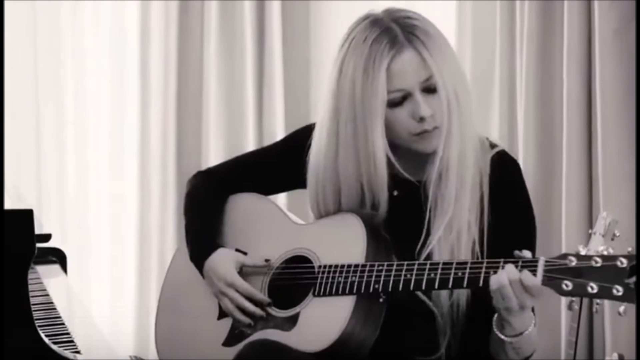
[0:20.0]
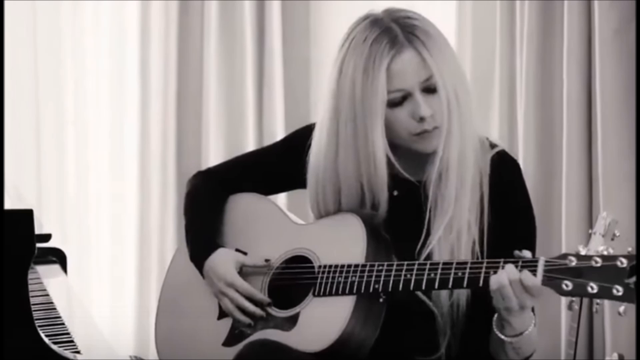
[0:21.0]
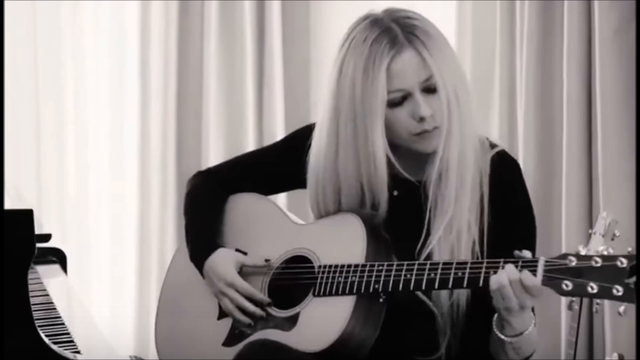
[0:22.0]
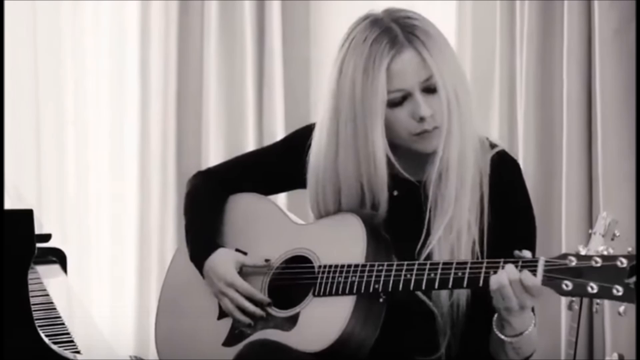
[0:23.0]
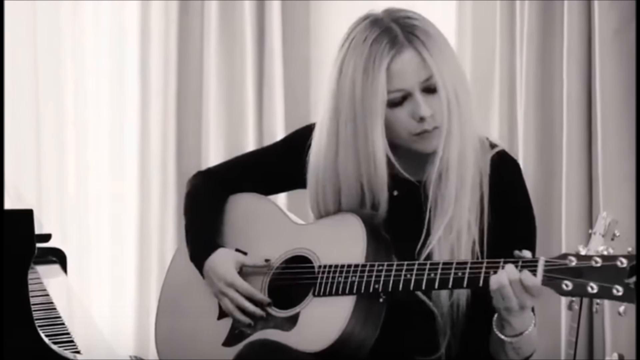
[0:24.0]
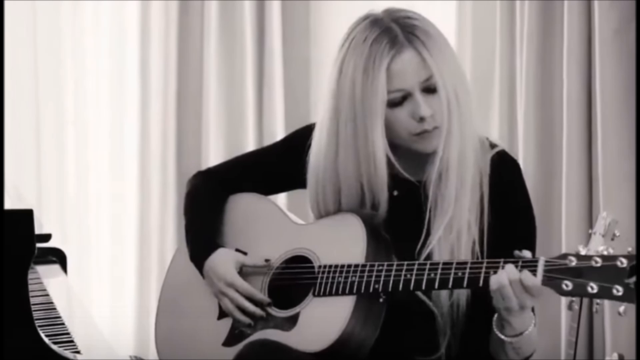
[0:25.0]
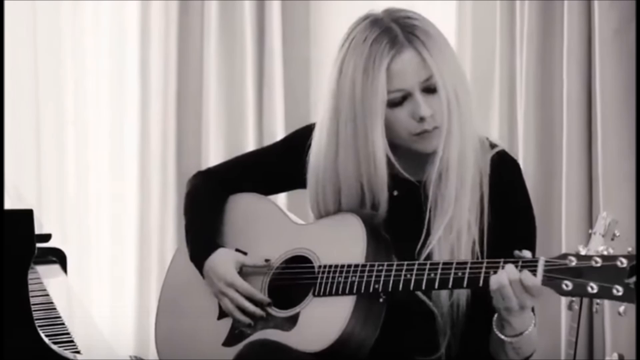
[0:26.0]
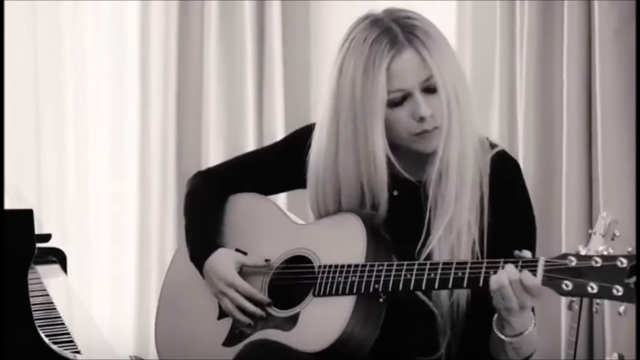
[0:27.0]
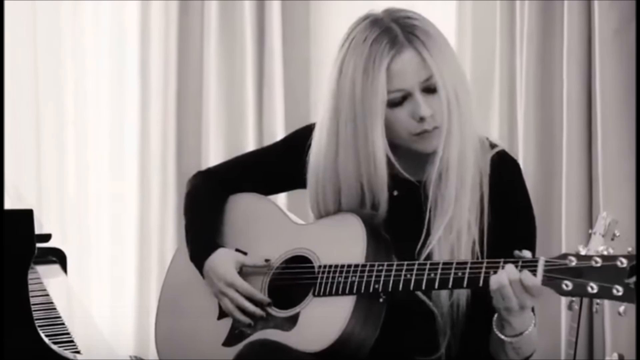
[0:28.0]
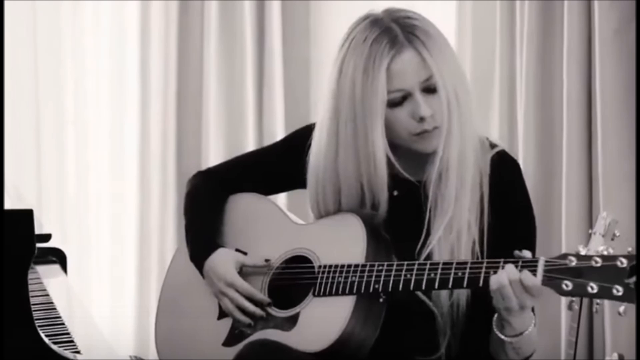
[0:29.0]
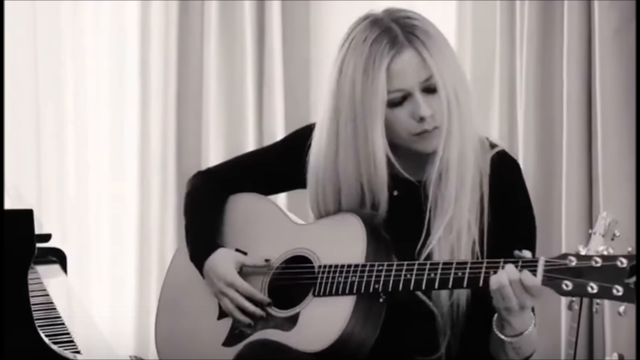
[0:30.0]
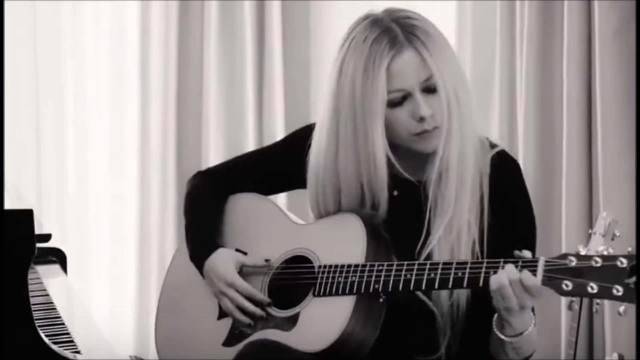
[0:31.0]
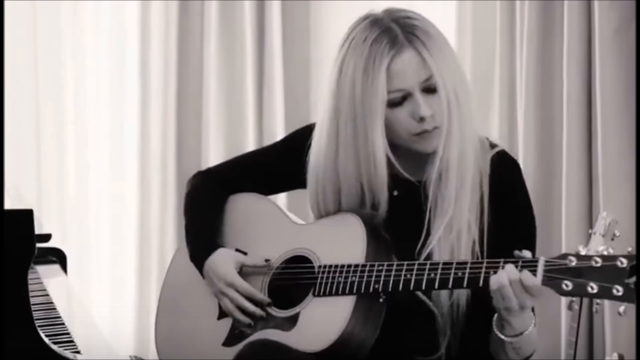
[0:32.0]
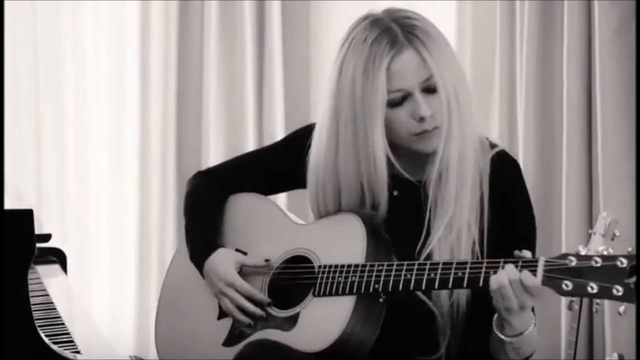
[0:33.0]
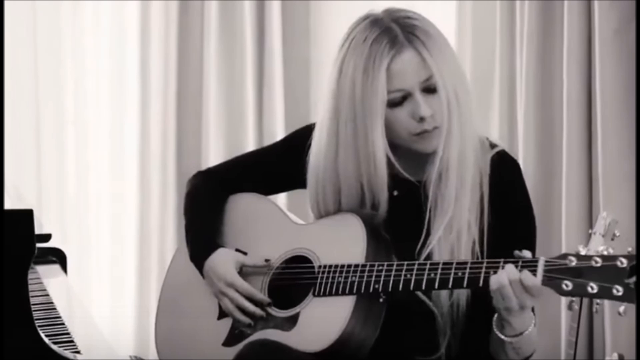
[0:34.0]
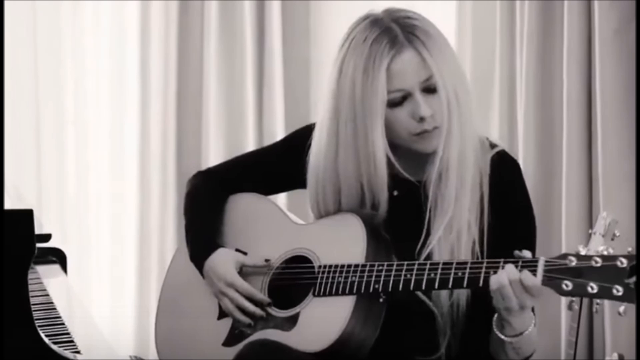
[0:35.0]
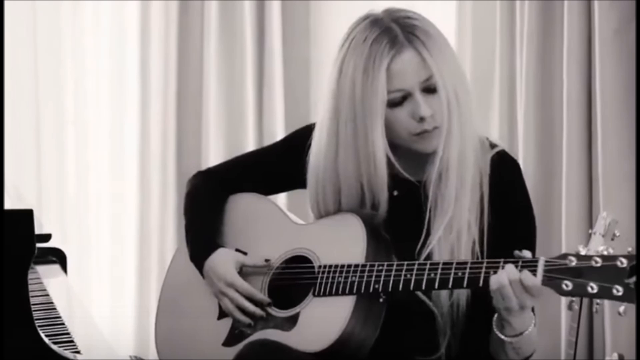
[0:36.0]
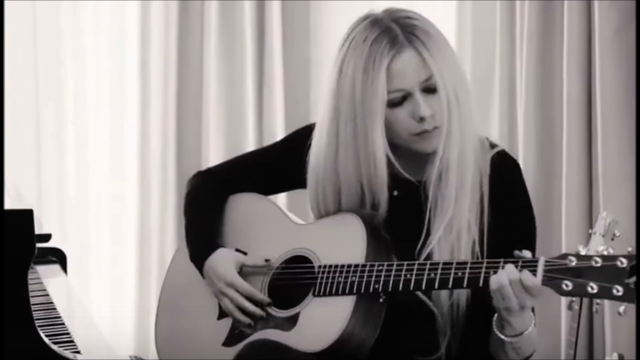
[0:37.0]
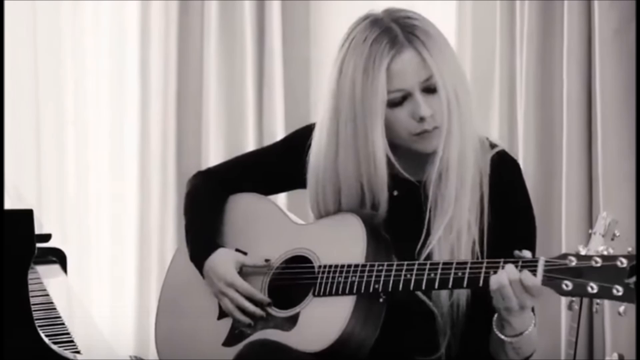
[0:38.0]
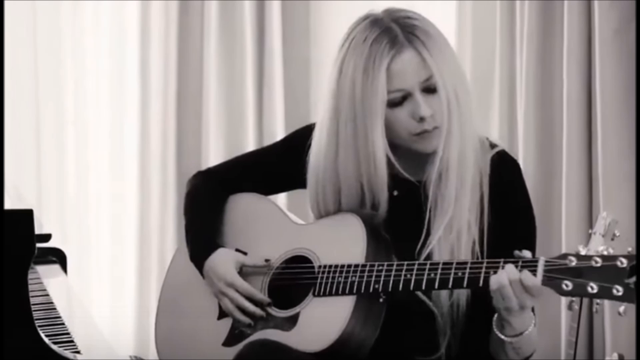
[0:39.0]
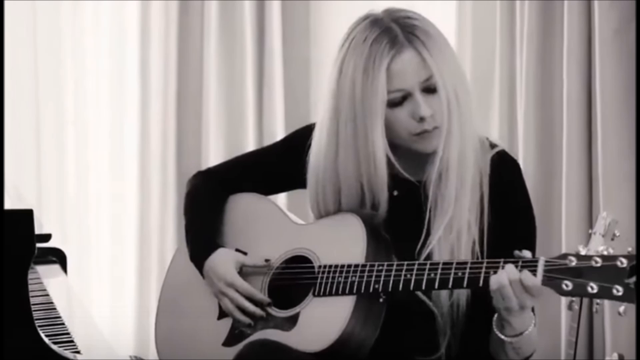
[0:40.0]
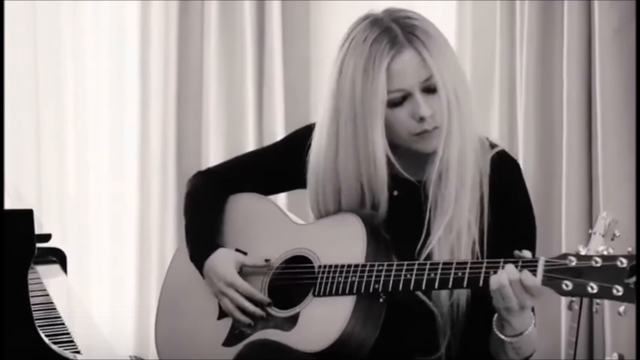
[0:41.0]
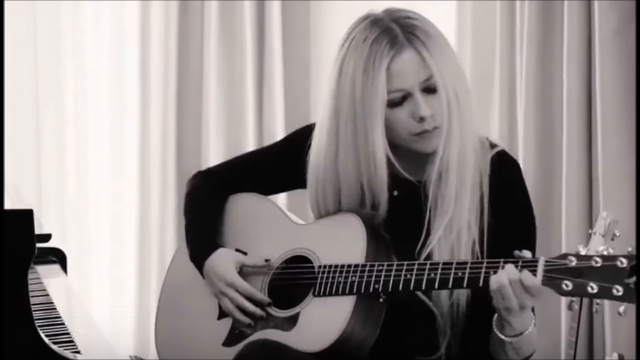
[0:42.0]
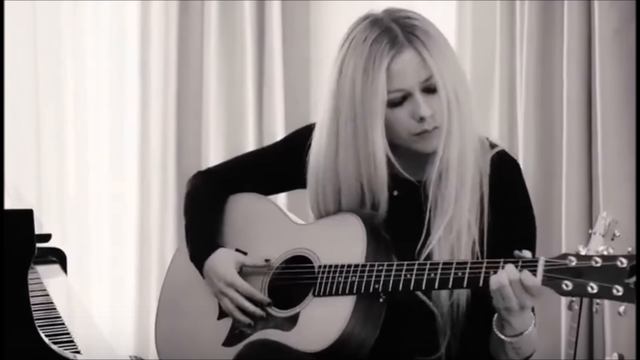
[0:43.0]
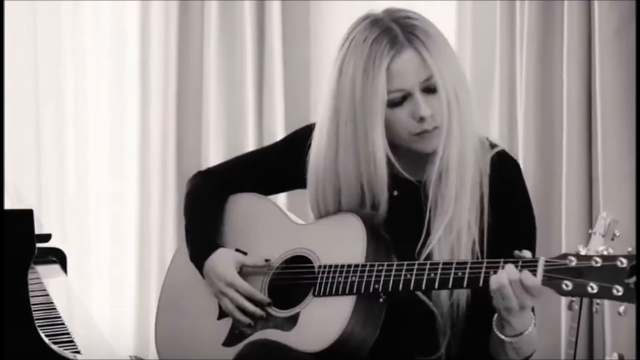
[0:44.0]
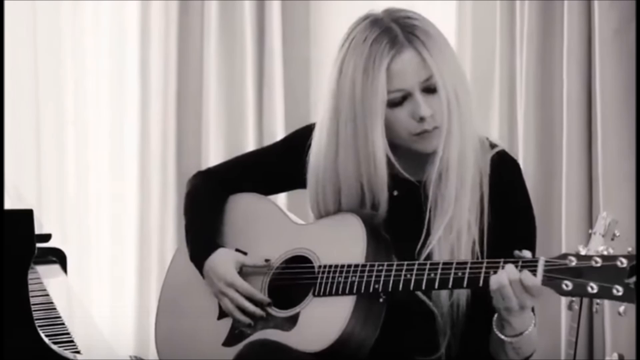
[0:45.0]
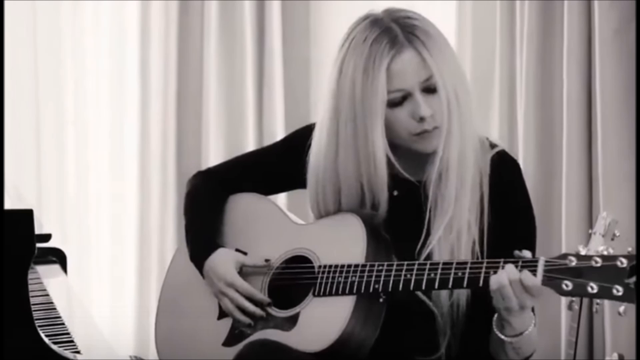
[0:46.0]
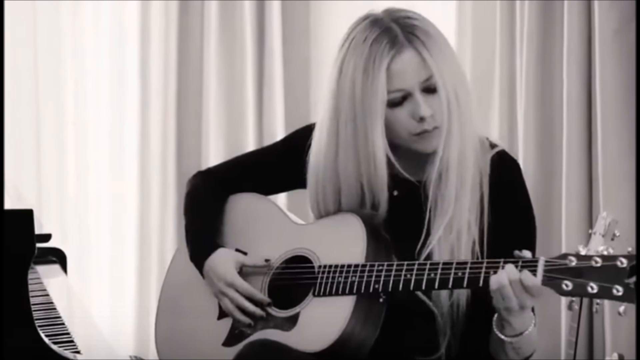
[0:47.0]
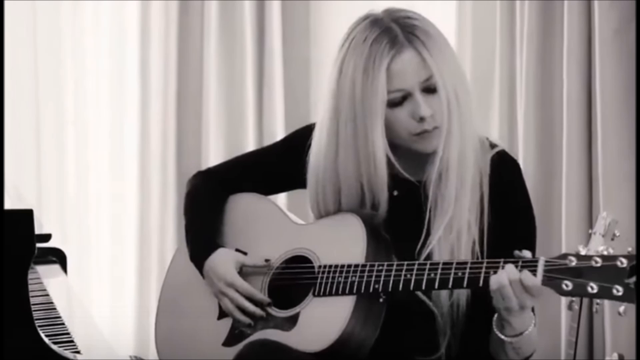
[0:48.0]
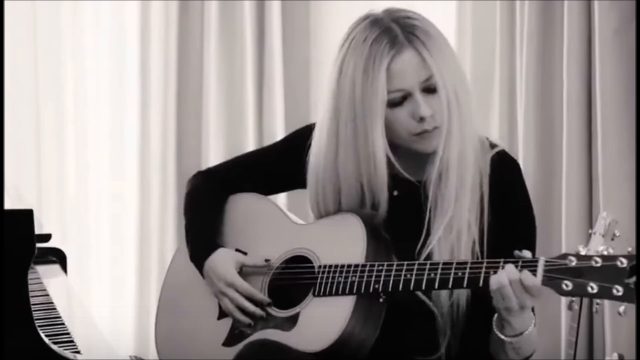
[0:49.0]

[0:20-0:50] A still shot shows Avril Lavigne in a black long-sleeved shirt playing an acoustic guitar, strumming with her right thumb while her left hand selects the notes. She is sitting next to a piano; its keys are visible and its cover is raised. Sheer, see-through curtains hang behind her. She wears eye shadow, and her fingernails are painted a dark color. The guitar has six strings, dark trim and a light face. There is another guitar behind her, and there is a door behind her. Her hair is blonde, darker at the roots and parted in the middle. Her mouth is closed and her eyes appear to be closed, but she is looking at her left hand, which is selecting the chords she is playing.